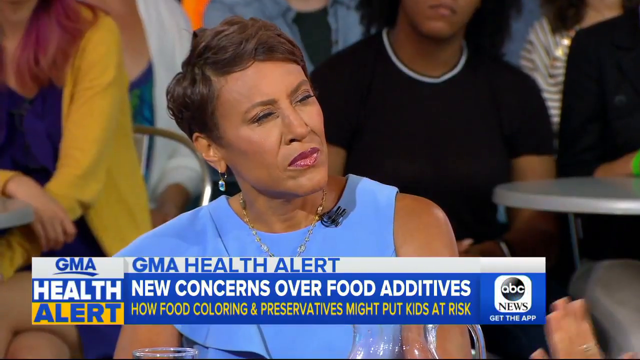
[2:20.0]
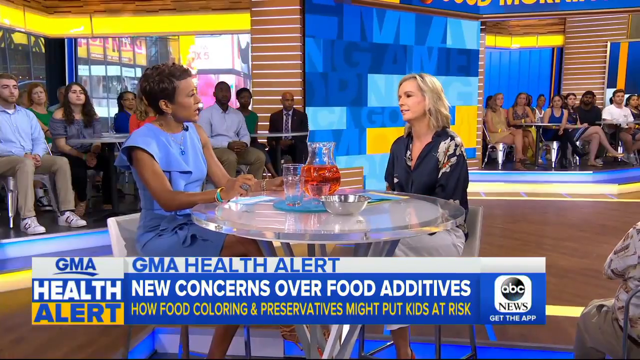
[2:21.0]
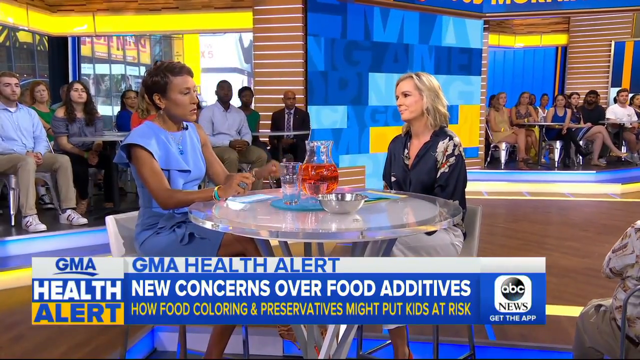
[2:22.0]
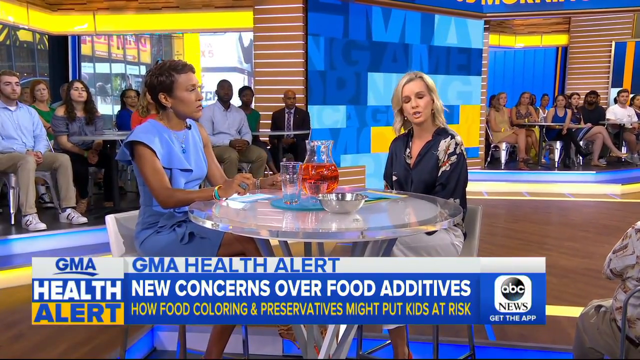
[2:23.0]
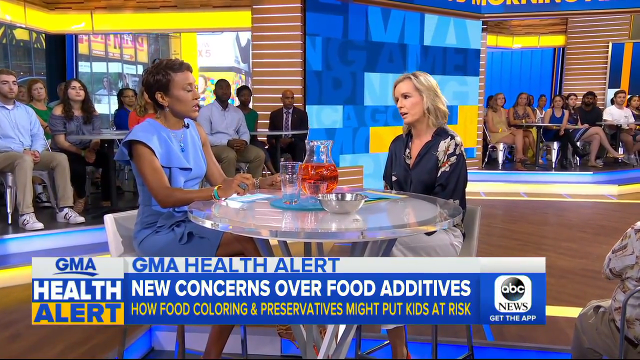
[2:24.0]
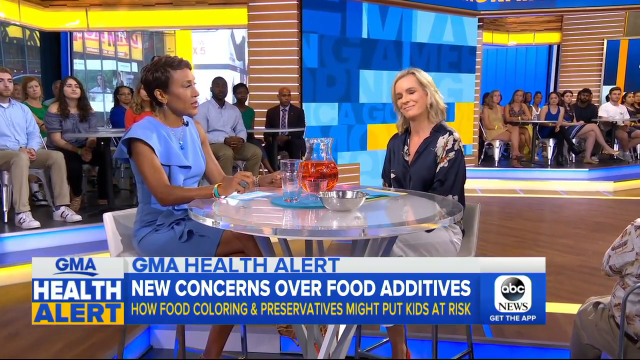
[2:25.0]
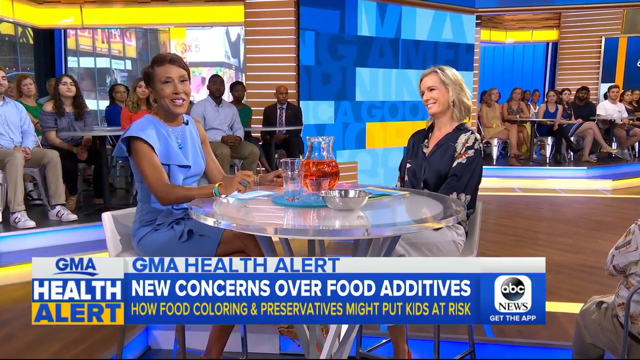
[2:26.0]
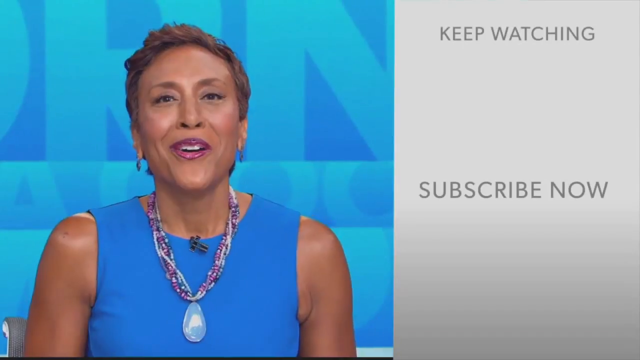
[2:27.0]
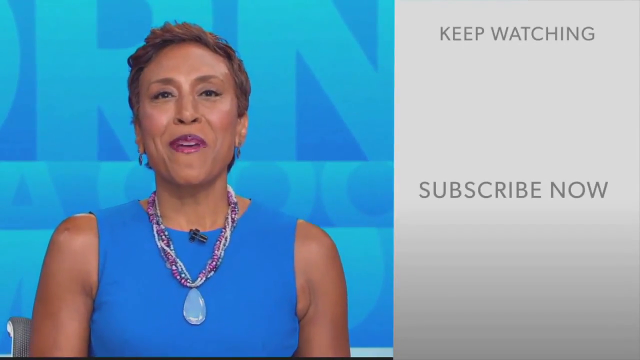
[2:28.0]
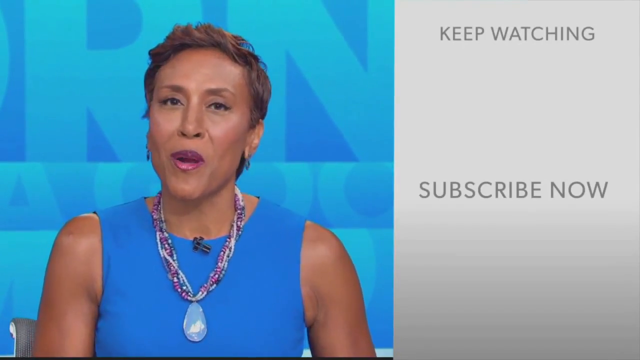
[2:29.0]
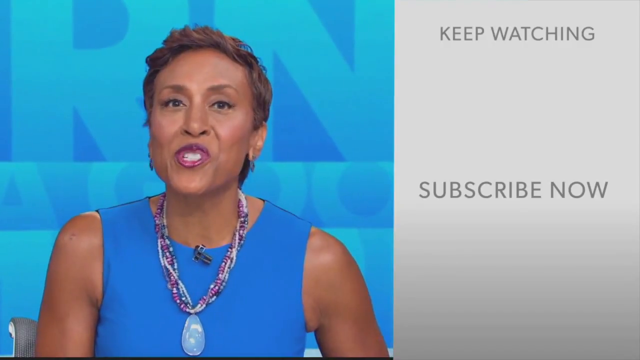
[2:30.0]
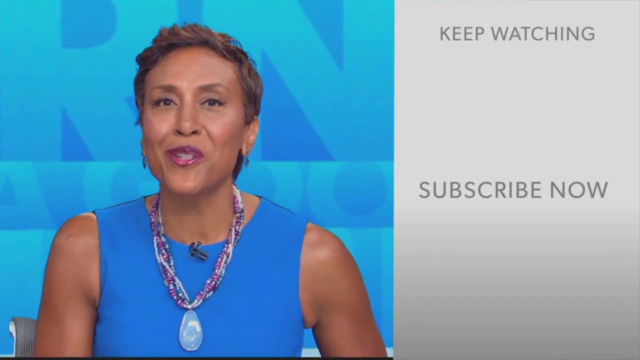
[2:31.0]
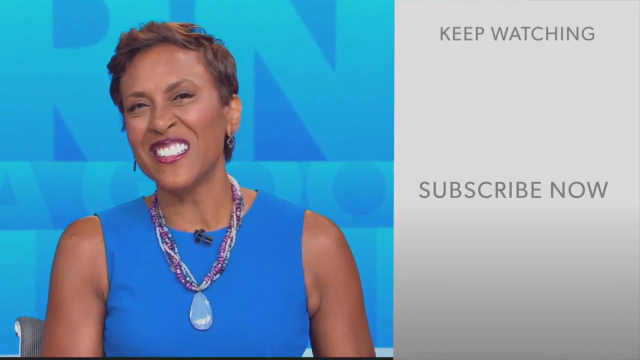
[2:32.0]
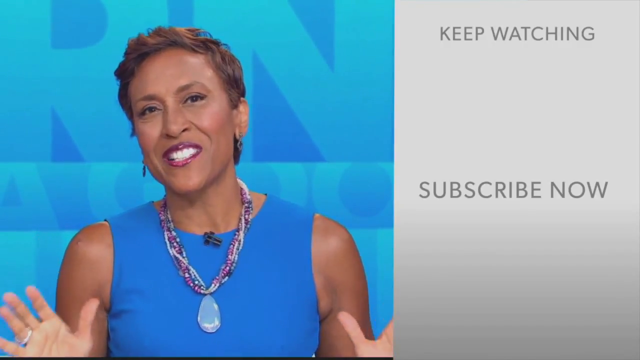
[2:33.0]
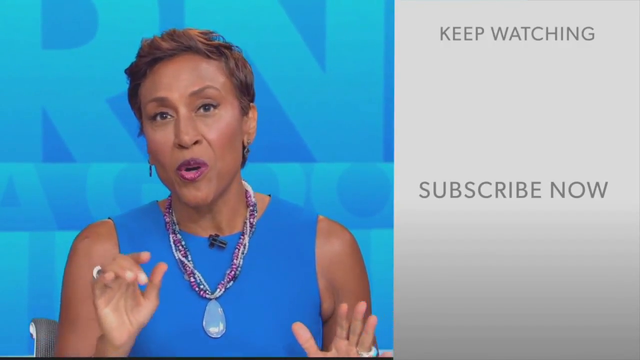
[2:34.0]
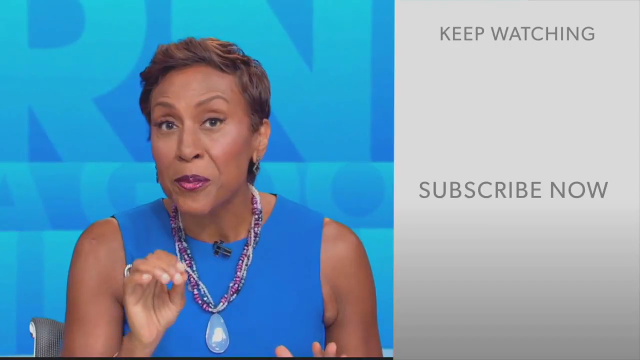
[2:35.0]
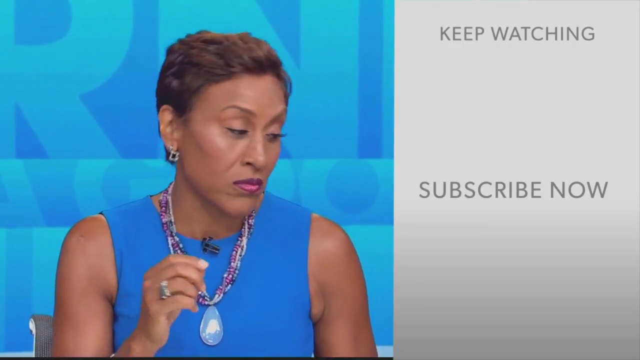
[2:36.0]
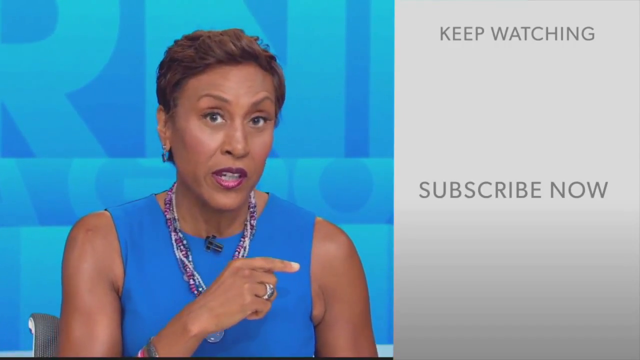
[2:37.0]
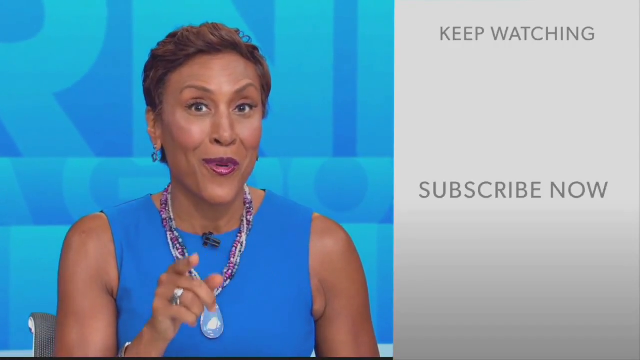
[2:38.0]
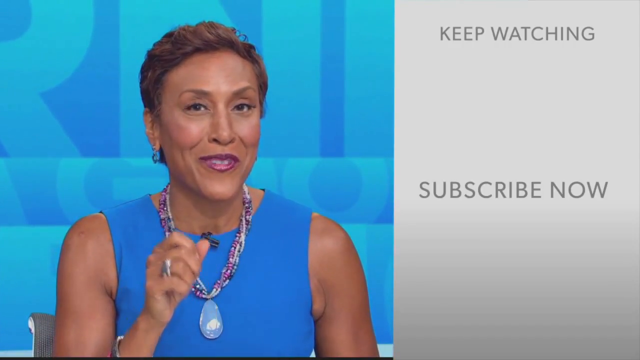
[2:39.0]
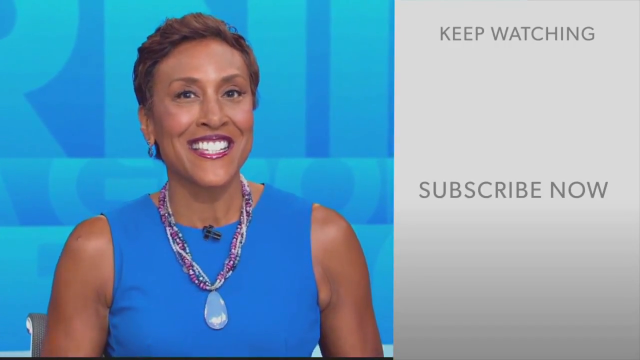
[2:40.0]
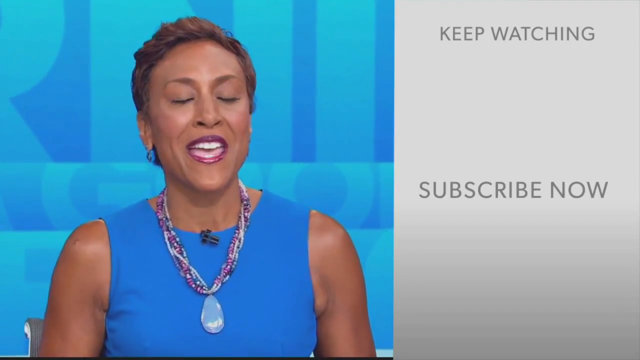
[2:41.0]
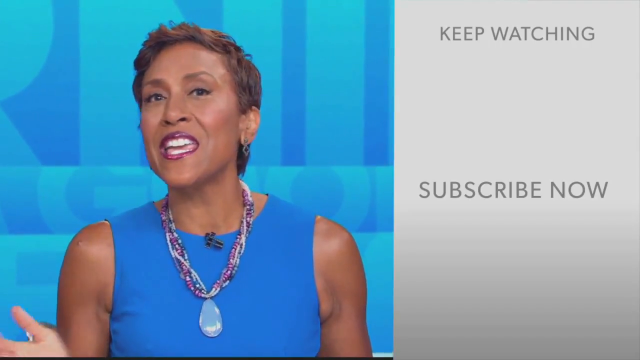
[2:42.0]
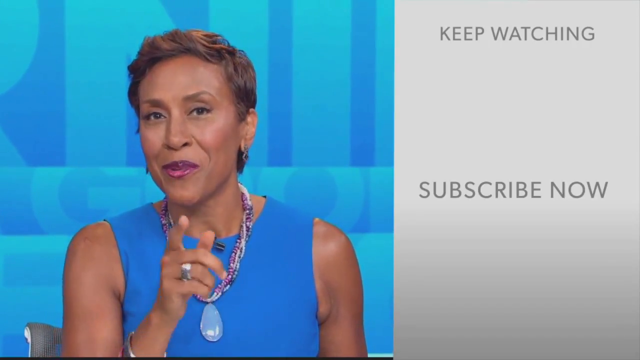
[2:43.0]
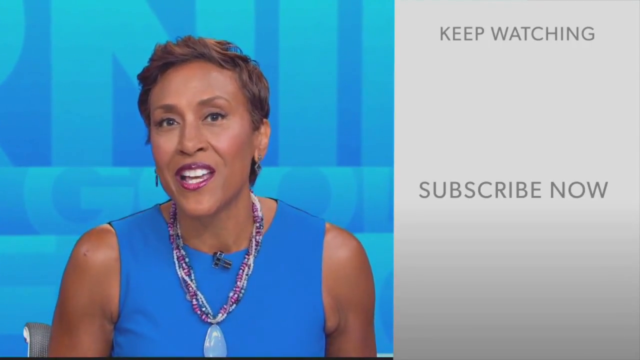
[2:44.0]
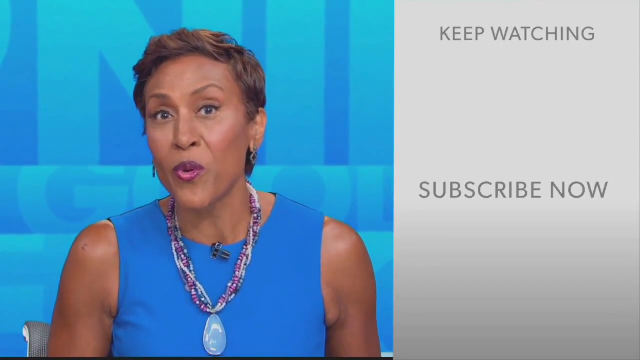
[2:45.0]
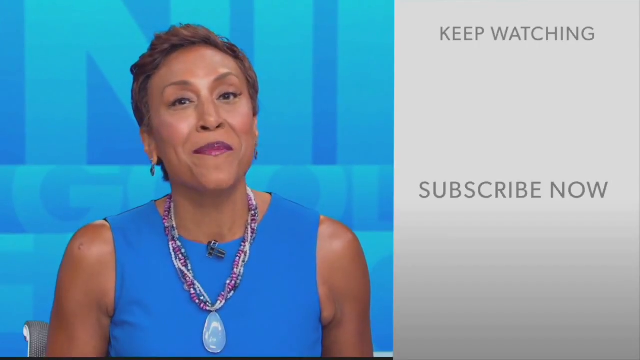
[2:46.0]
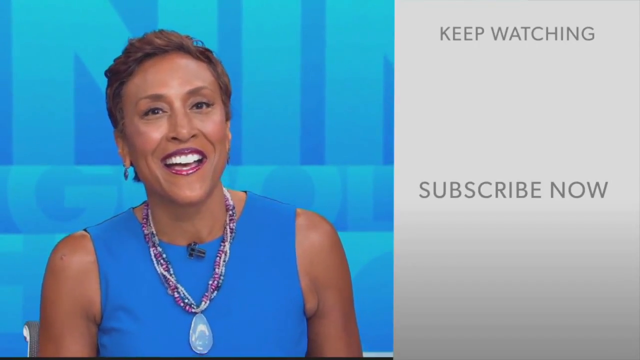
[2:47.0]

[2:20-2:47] The women talk and nod at each other, appearing to conclude the conversation. The video cuts to the black woman on the left-hand side of the screen against a blue background. She wears a slightly darker blue sleeveless, high-neck top, a necklace with a pale blue pendant at the bottom, dangly earrings and purple lipstick, with a microphone attached to her top at the base of her neck. On the right-hand side is a white section of the screen reading "keep watching, subscribe now". She talks while pointing to the "subscribe now" words, smiling as she talks, and then appears to wrap up.